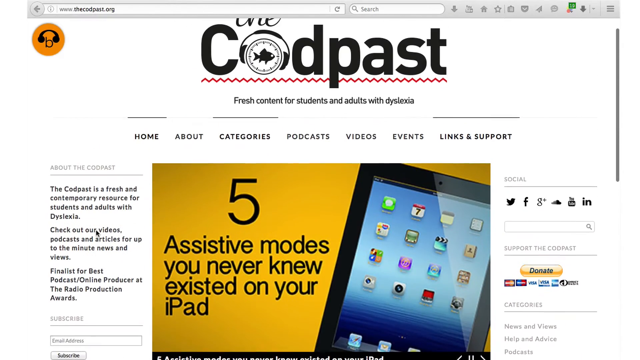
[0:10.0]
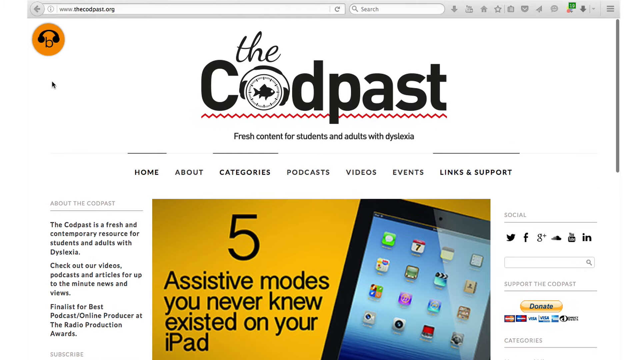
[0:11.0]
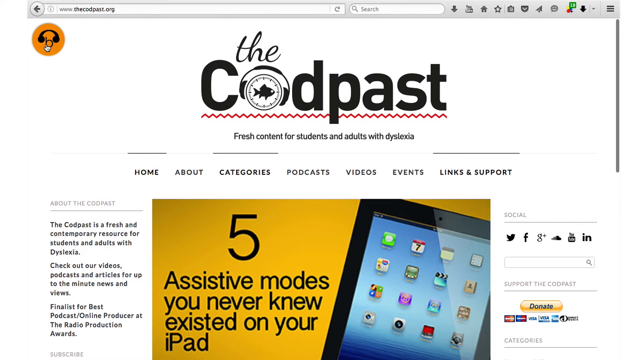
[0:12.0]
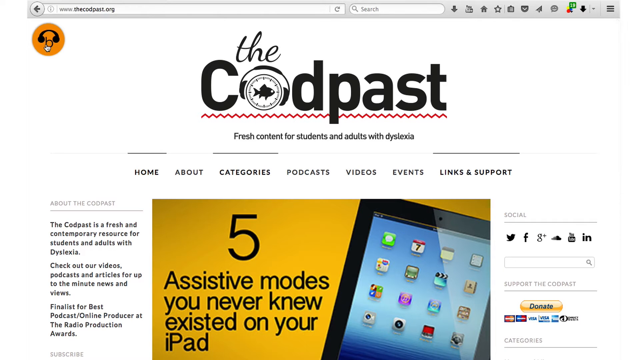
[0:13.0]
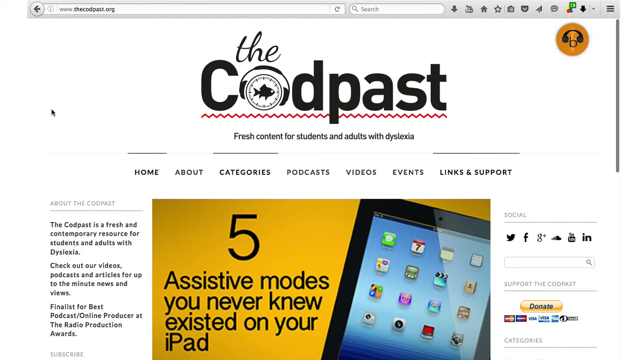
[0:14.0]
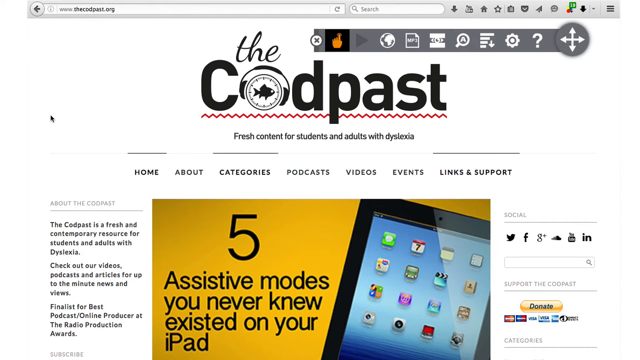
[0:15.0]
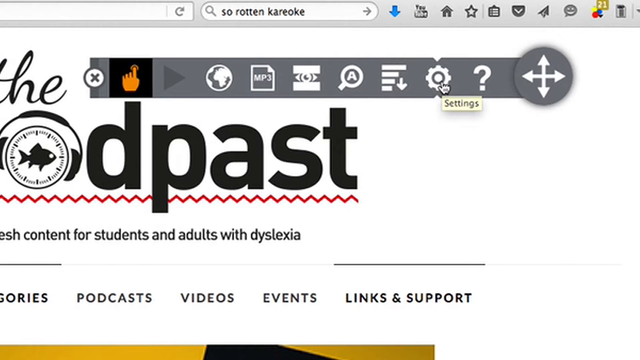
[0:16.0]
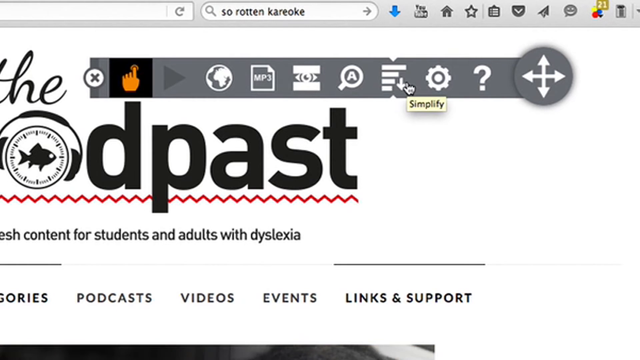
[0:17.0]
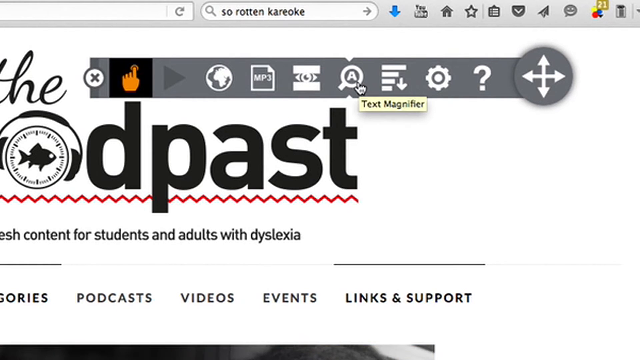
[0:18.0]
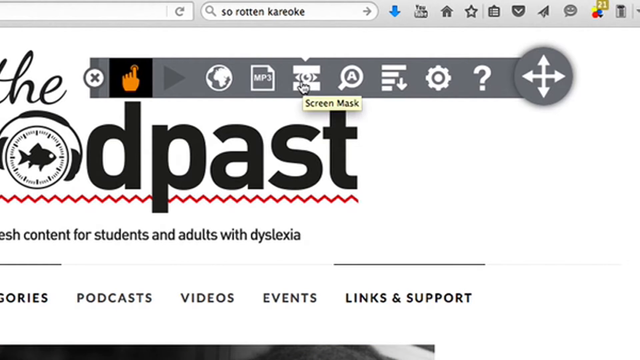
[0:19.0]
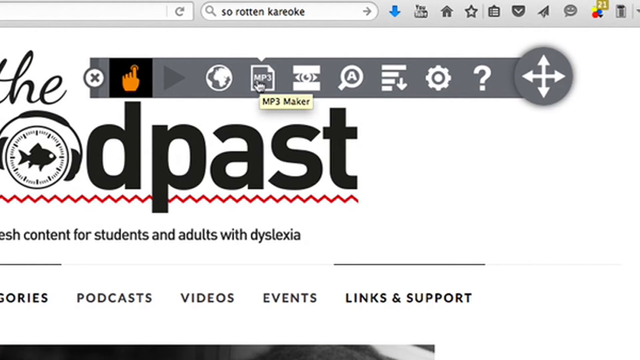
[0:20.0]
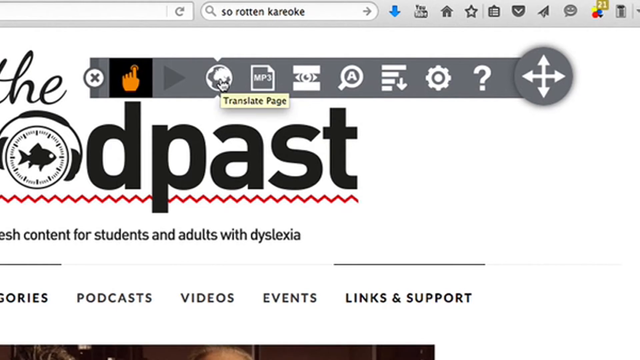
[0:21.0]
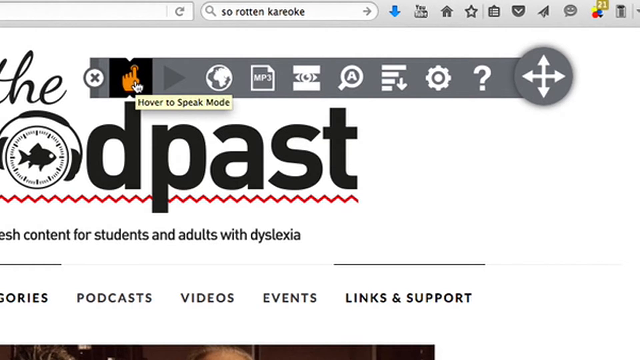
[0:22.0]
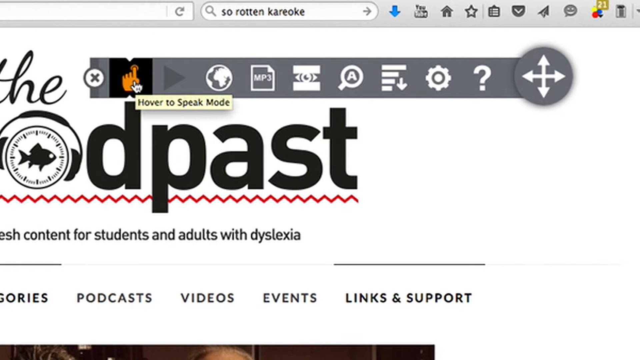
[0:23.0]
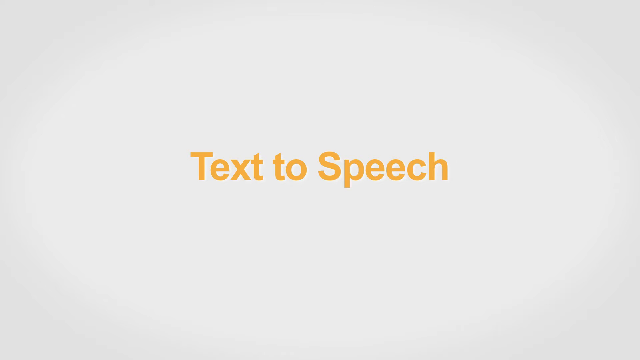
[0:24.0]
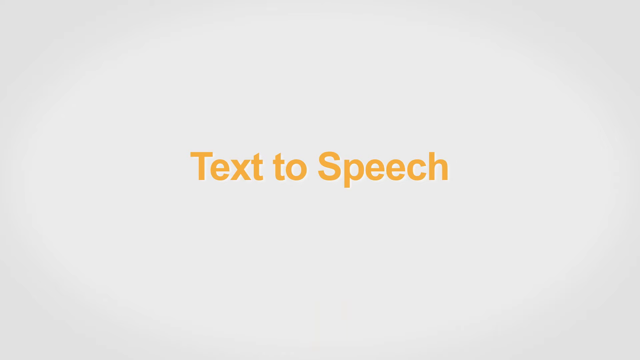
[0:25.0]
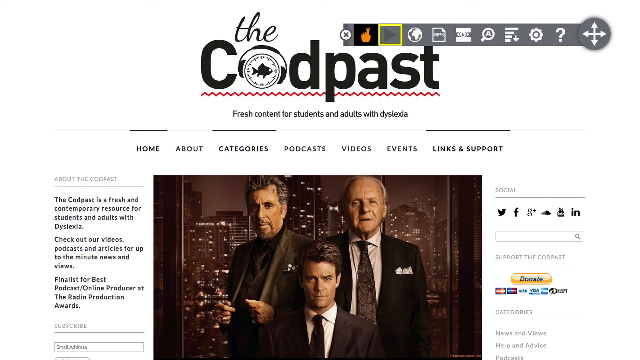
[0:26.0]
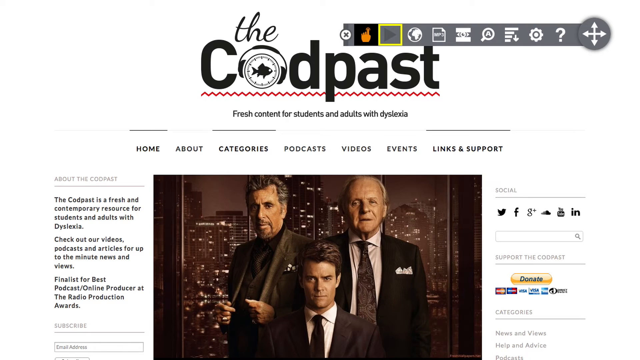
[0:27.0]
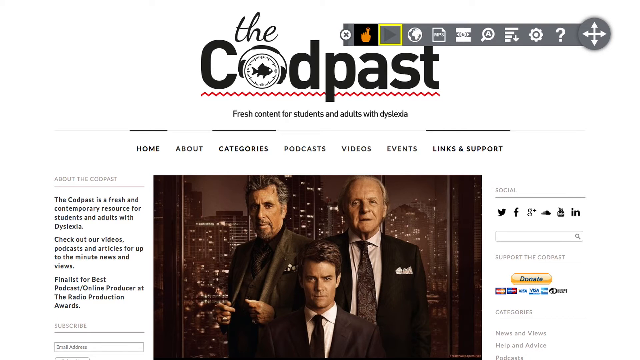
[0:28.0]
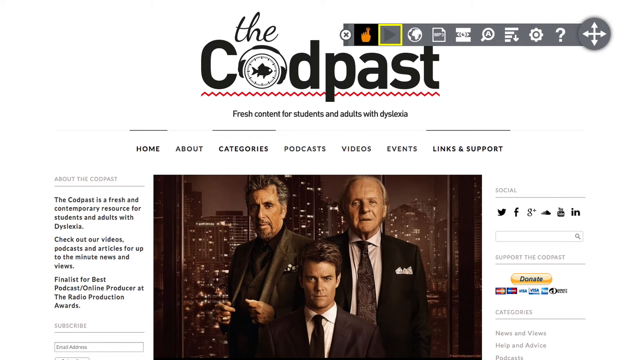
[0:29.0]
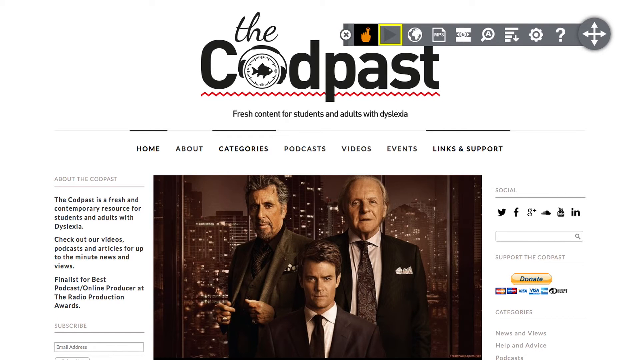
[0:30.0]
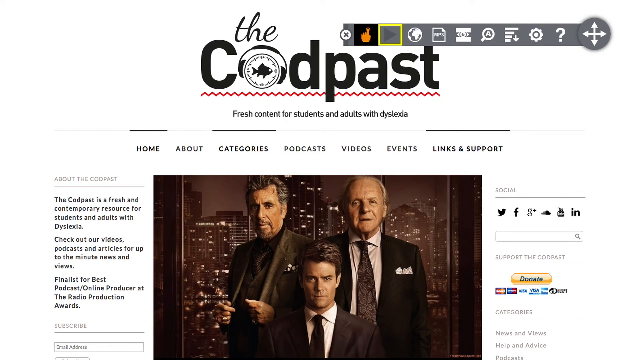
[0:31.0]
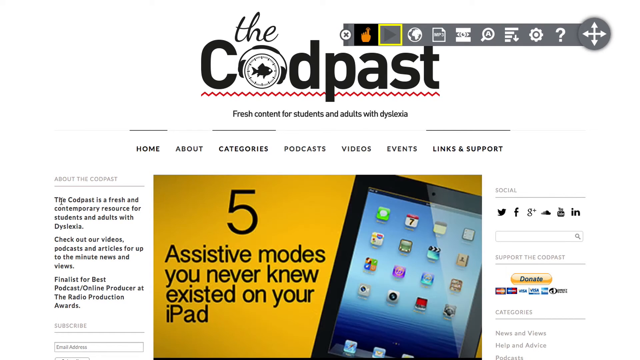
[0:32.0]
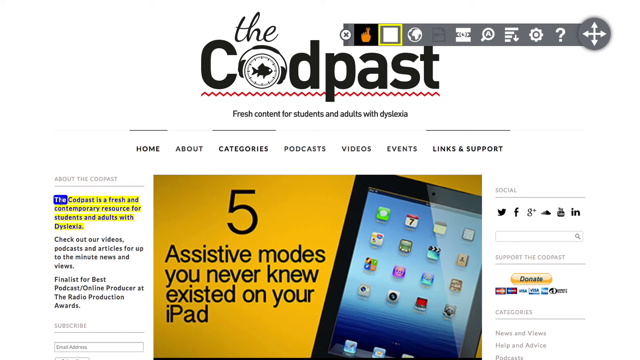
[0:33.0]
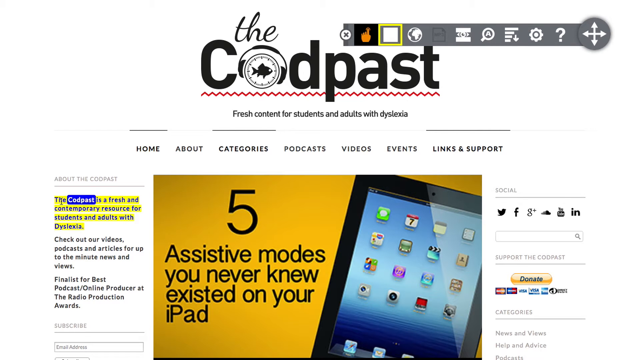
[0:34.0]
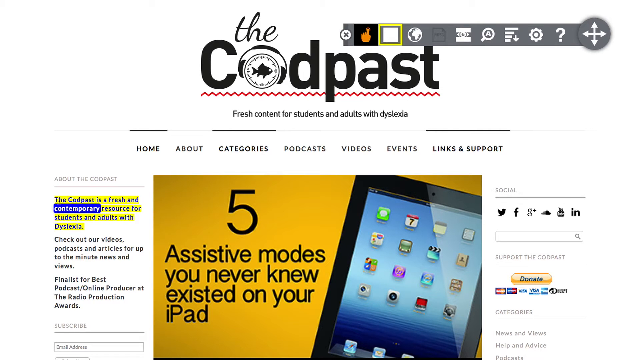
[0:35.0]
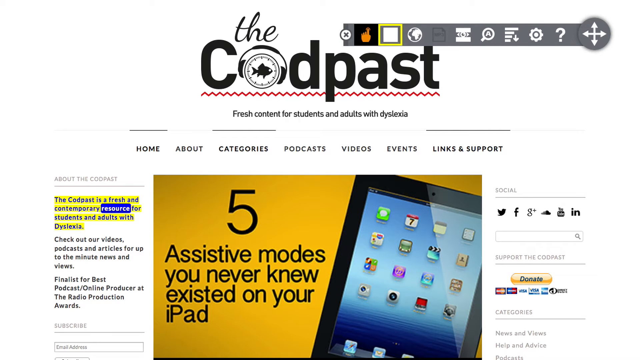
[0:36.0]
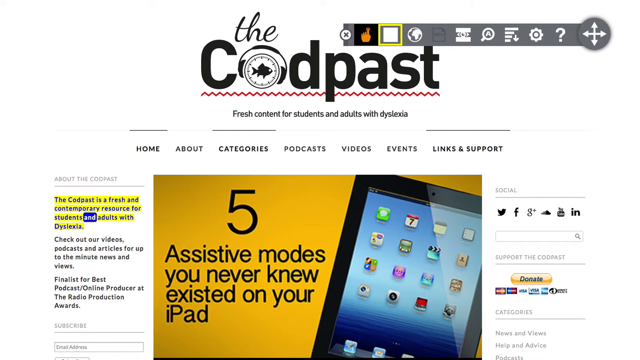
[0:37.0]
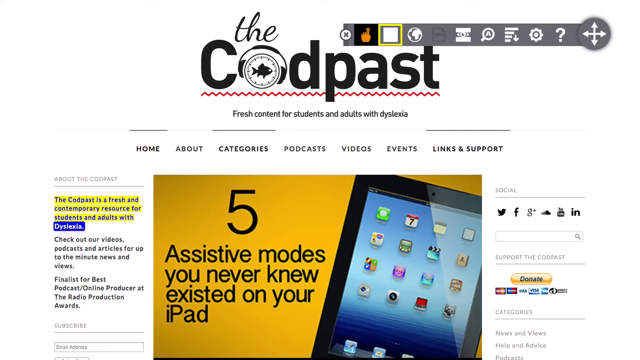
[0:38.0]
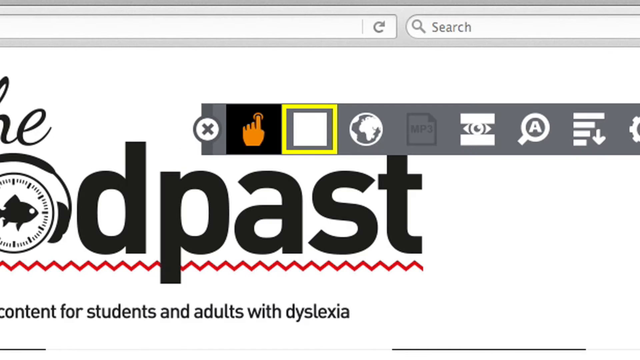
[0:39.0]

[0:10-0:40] The page opens up and the person scrolls to the top, where the logo reads the Codpest; the O in Codpest contains a fishbowl with a fish in it. The text says "fresh content for students and adults with dyslexia." Sections of the page are listed: home, about, categories, podcasts, videos, events, links, and support. Below is an image of a black iPad on the right, with the text "five assistive modes you never knew existed on your iPad." The zoom in button is then shown. The video cuts to text-to-speech, then shows "click on a headline," and the text-to-speech feature reads the headline aloud.